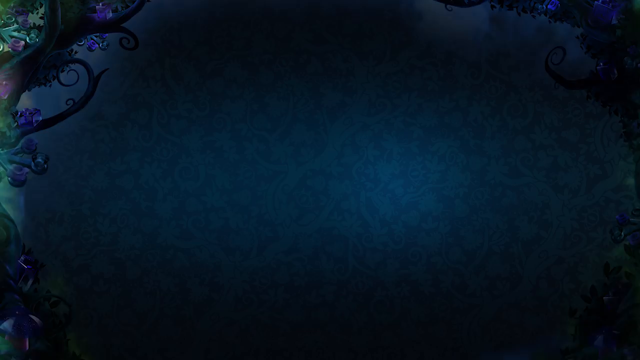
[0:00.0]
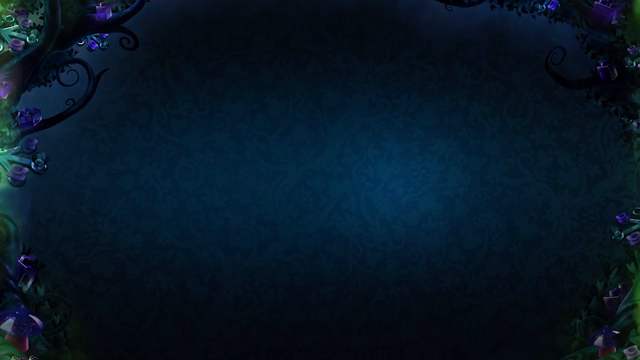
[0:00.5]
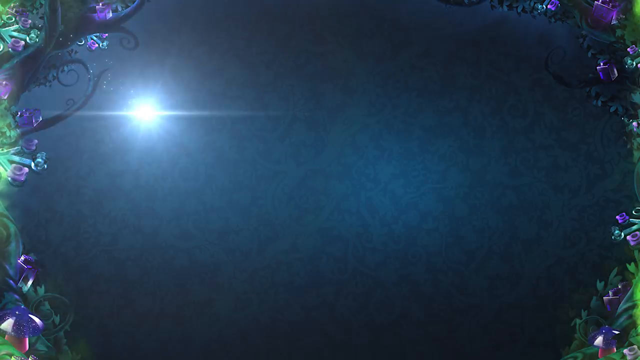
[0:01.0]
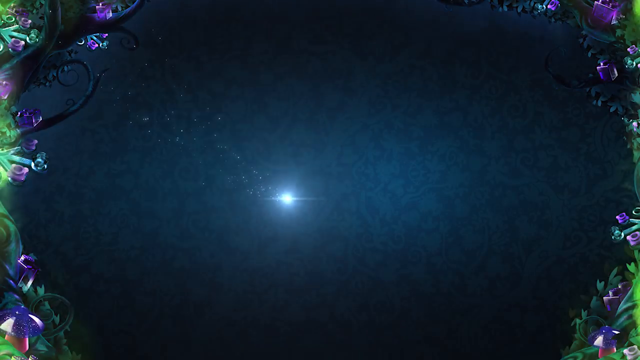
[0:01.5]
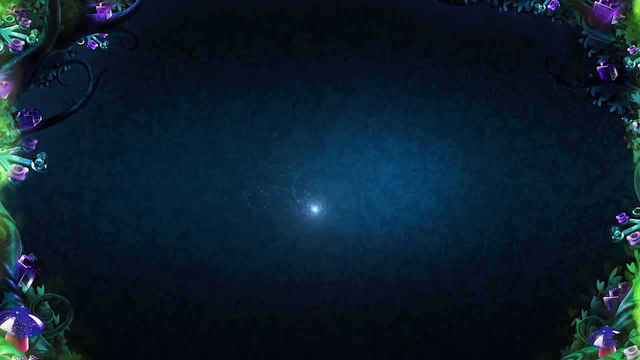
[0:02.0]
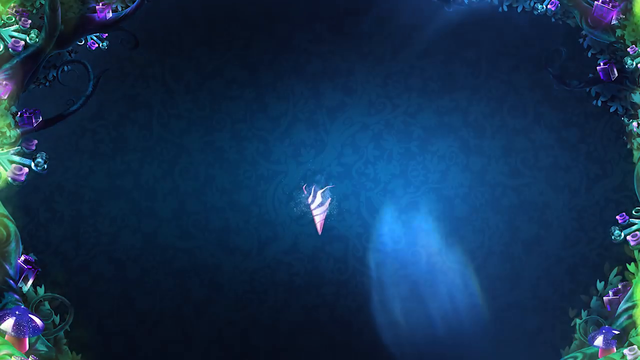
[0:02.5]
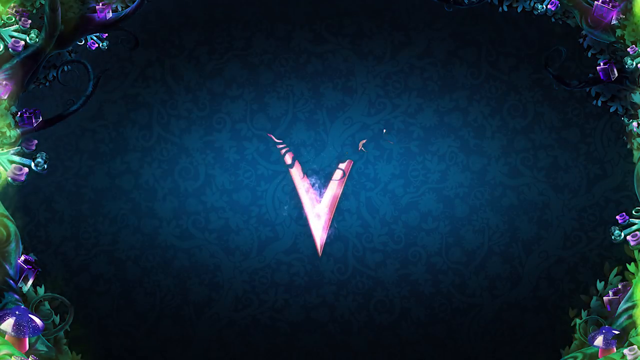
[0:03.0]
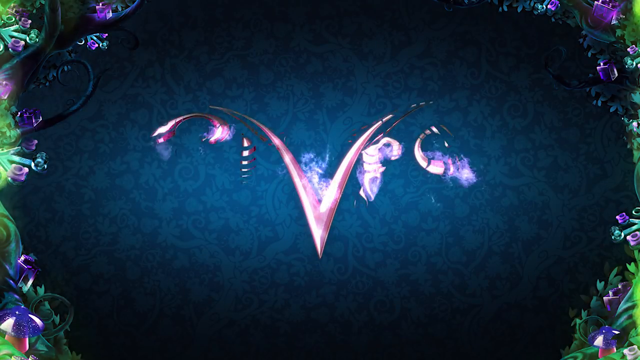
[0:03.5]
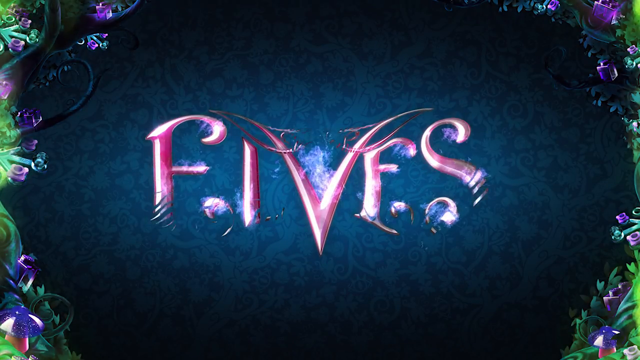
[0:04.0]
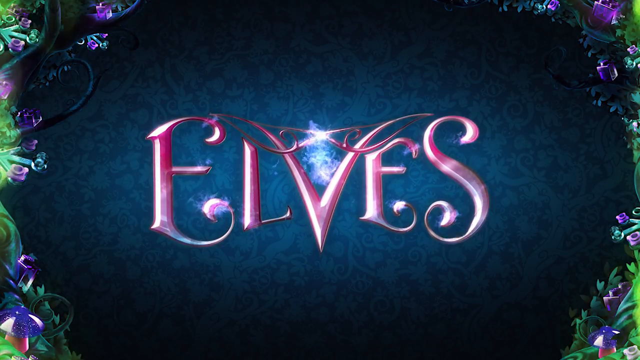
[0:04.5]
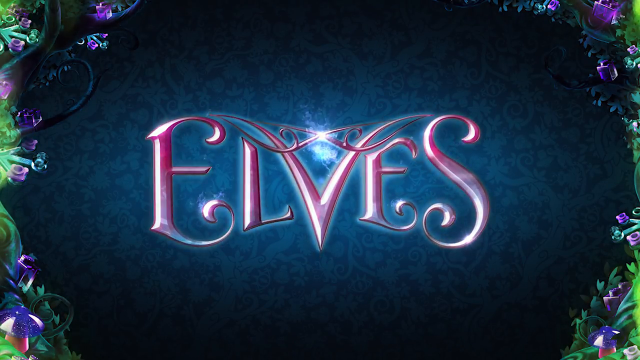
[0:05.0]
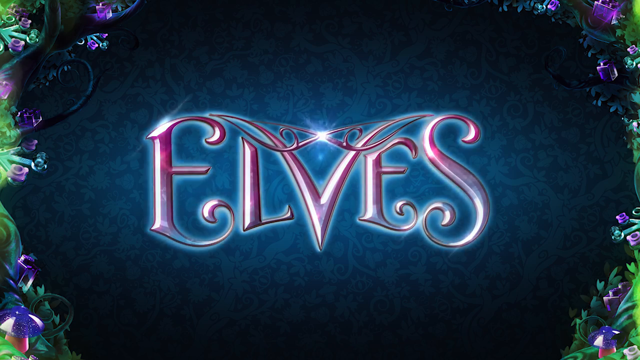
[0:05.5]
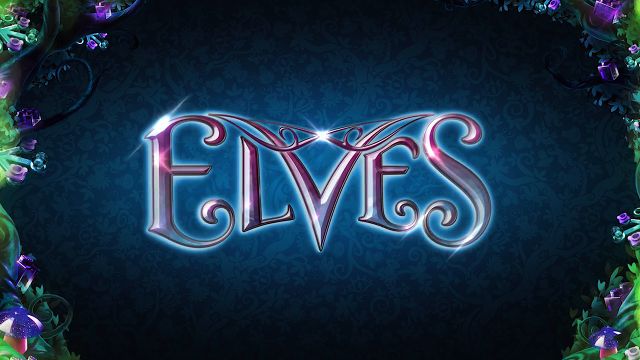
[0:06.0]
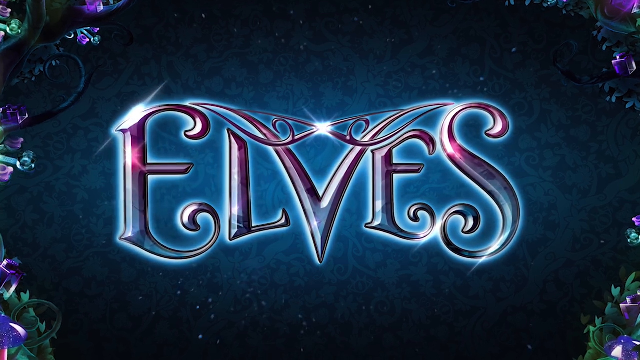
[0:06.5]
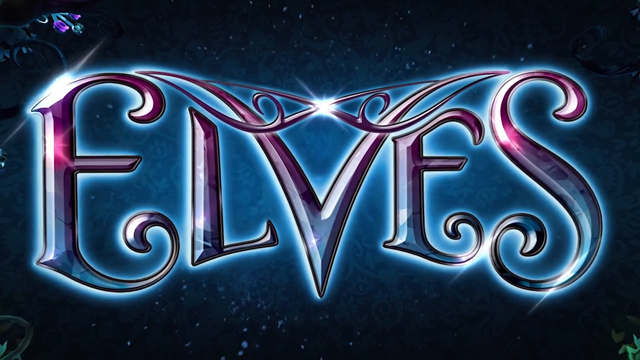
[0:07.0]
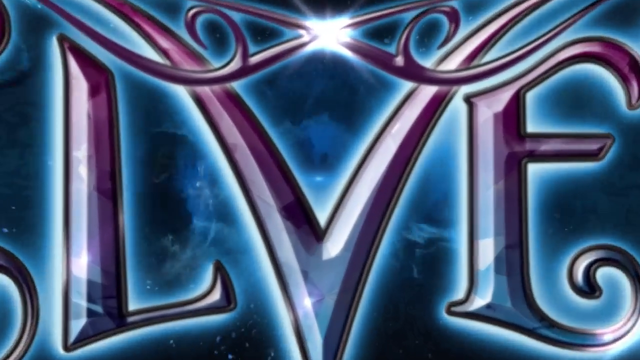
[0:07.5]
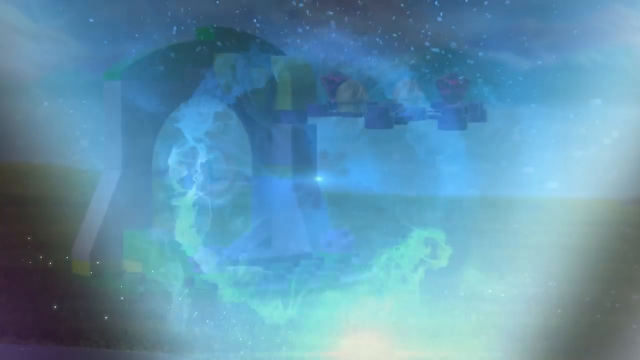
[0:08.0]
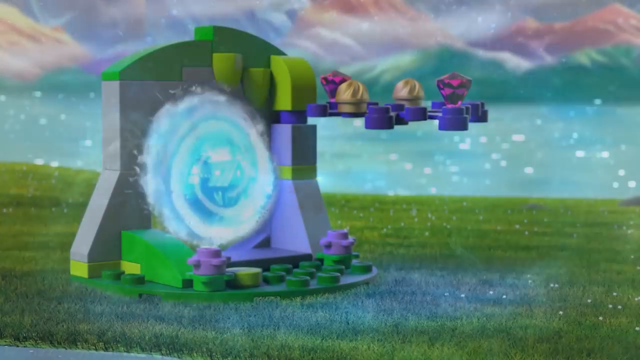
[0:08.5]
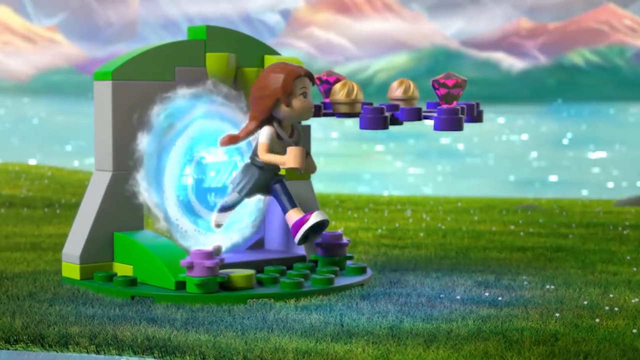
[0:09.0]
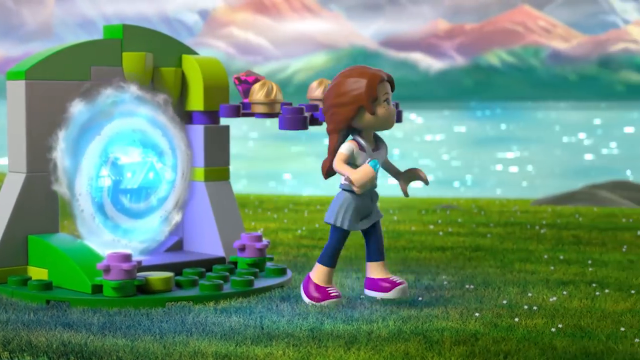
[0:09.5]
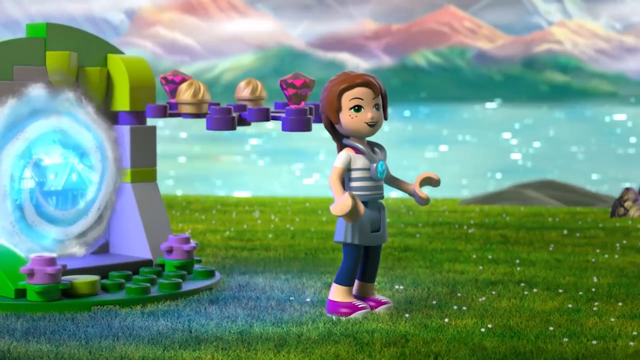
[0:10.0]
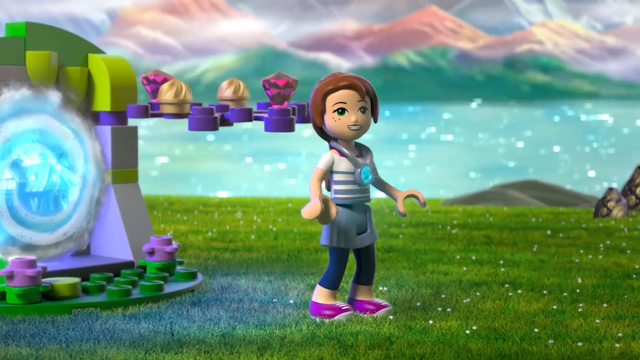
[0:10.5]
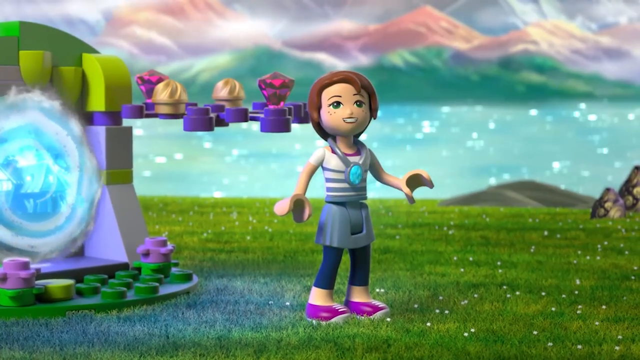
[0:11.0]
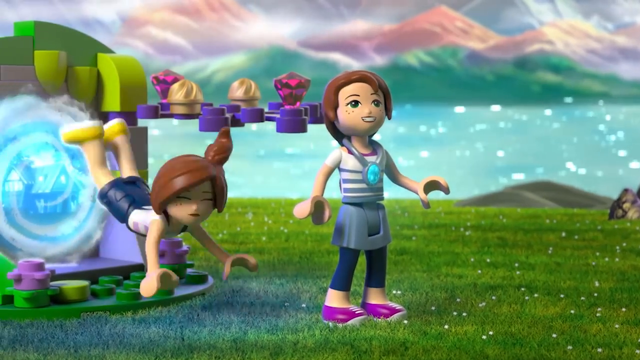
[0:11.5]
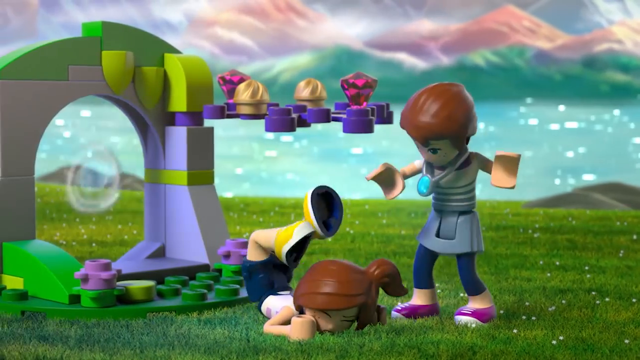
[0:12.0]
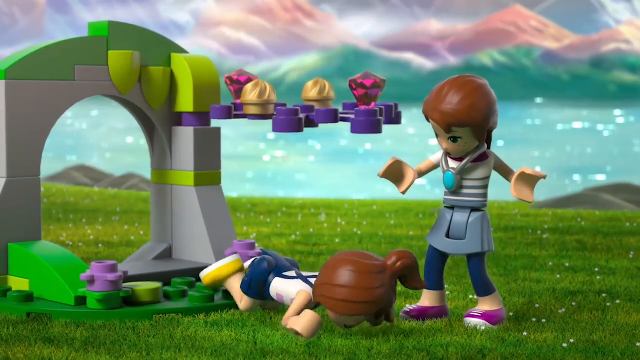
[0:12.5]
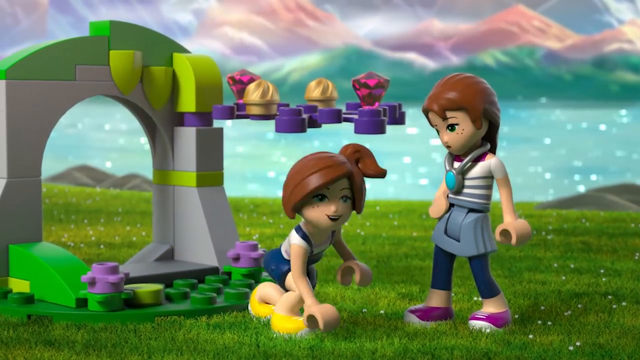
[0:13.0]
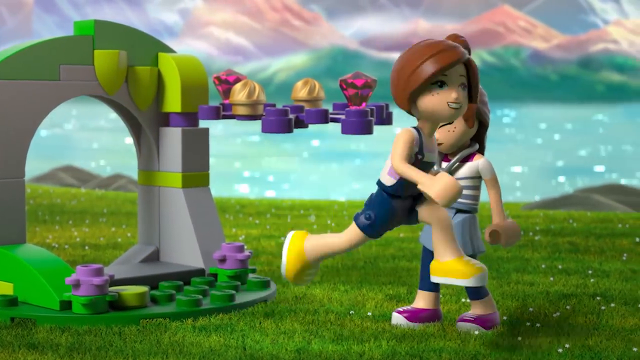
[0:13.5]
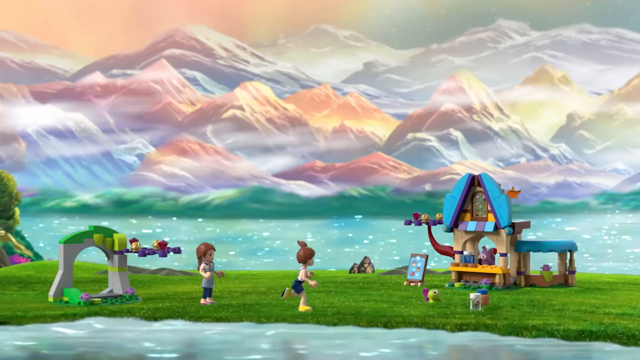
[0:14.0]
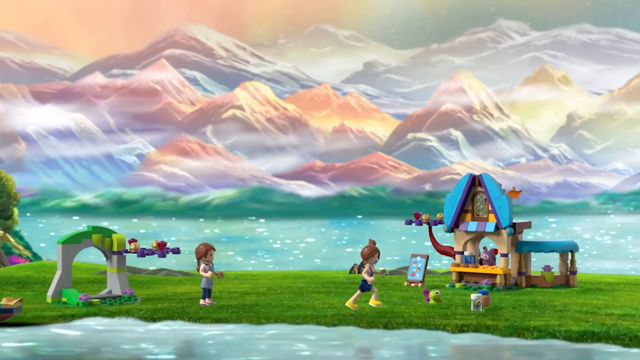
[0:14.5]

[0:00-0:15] The video opens on a dark blue screen whose sides are lined with green plants bearing purple flowers. In the middle, a V, like a magical V, is drawn into the background, and letters appear on each side of it to form the word "elves". The animation then continues to a portal. Looking into the portal, a girl comes outside; she is a fair-skinned, Lego-style girl in a very casual kind of outfit, and everything is Lego-styled. She comes into an environment with grass, a sparkling sea behind her, and mountains. After she comes out, another girl falls out of the portal. The two look similar but wear different clothes, and the second girl is also a Lego action figure. She runs right past the first girl toward some kind of stand.